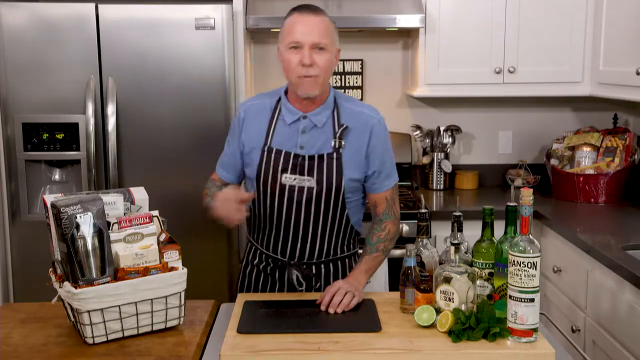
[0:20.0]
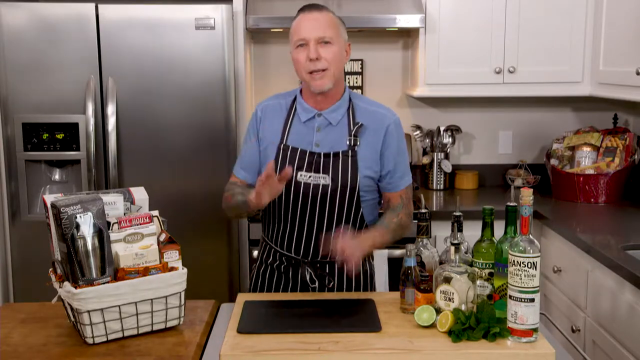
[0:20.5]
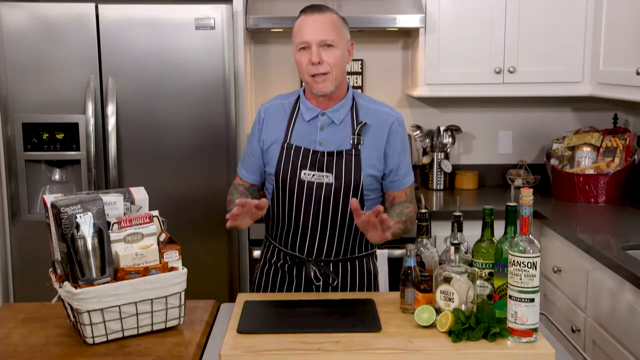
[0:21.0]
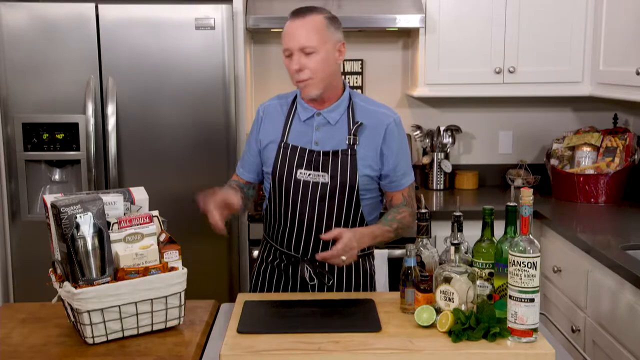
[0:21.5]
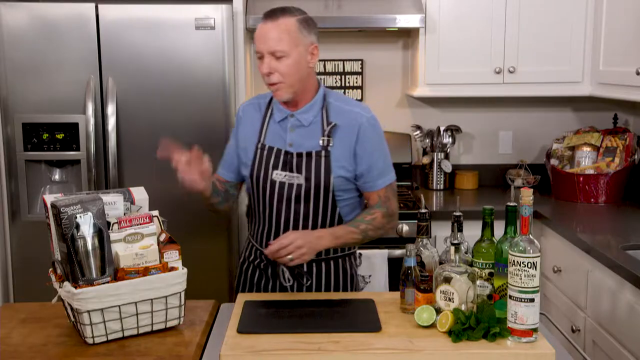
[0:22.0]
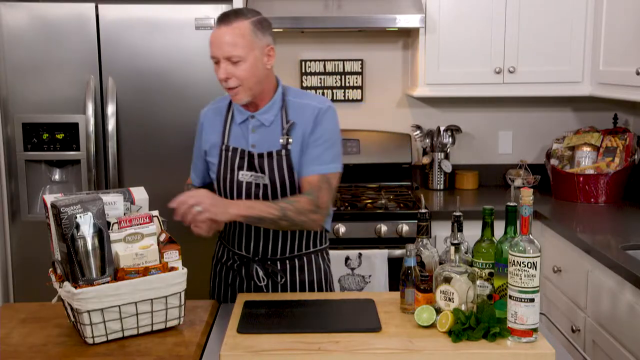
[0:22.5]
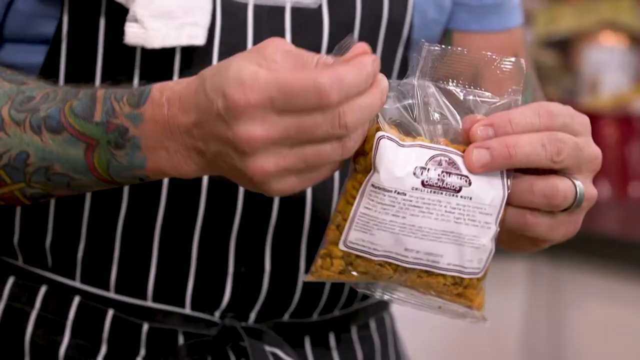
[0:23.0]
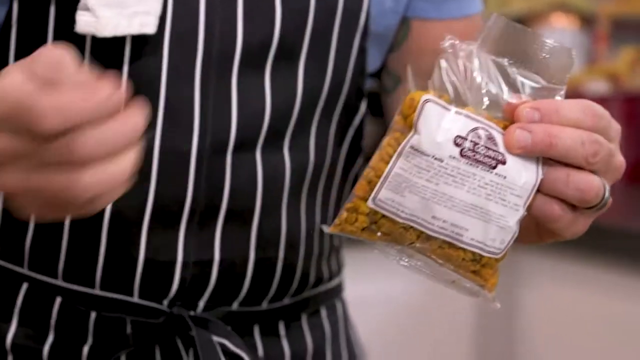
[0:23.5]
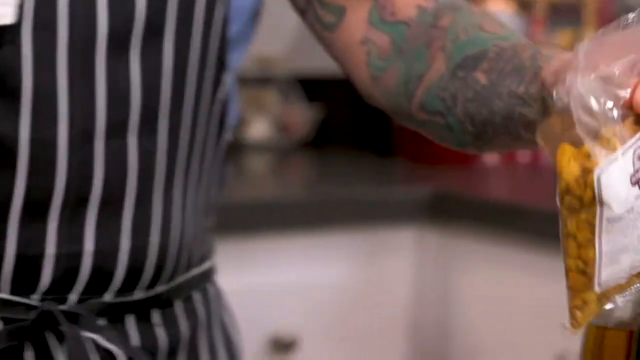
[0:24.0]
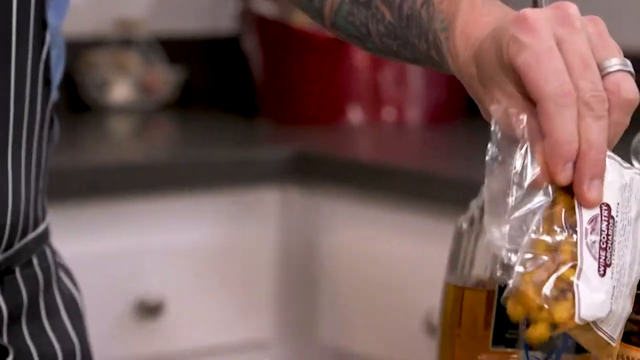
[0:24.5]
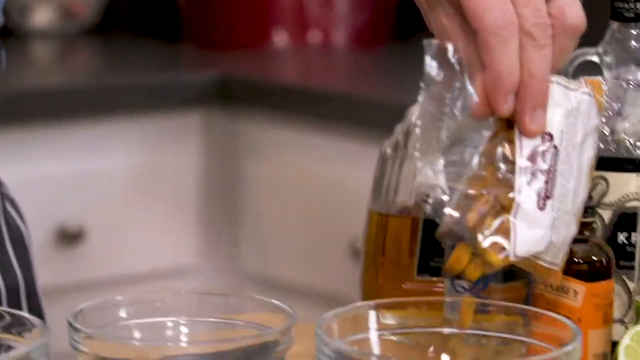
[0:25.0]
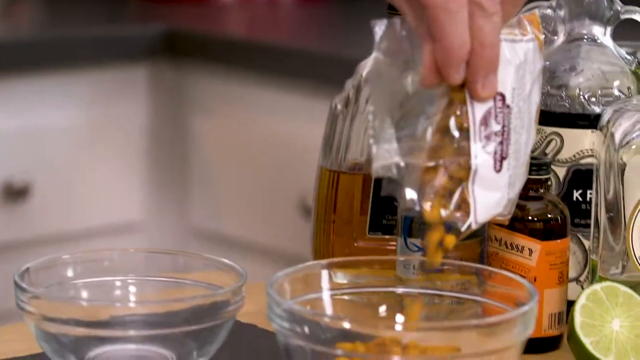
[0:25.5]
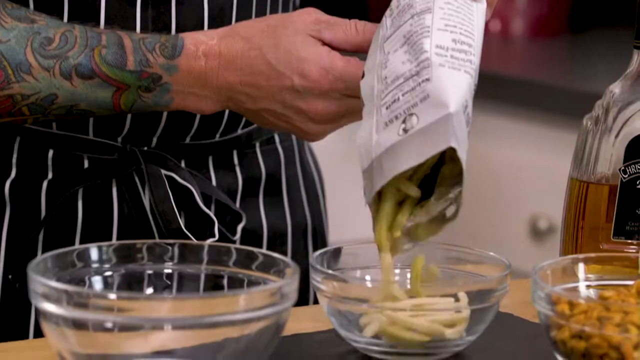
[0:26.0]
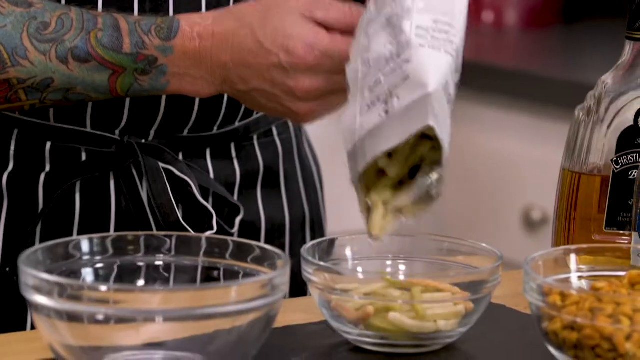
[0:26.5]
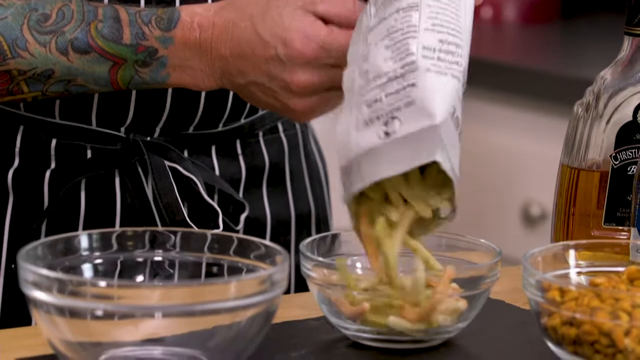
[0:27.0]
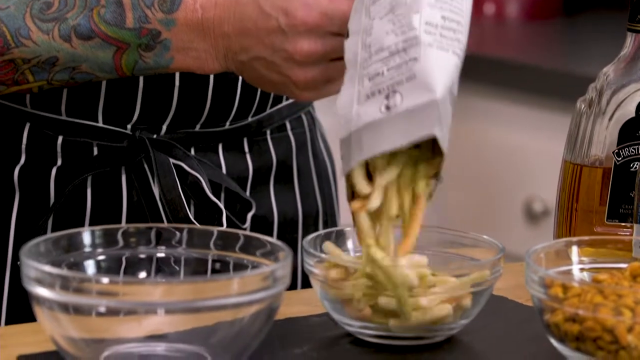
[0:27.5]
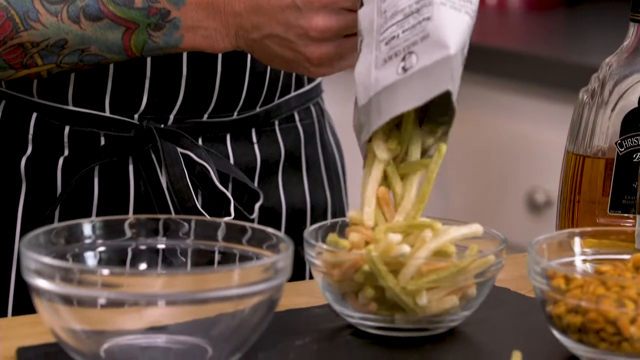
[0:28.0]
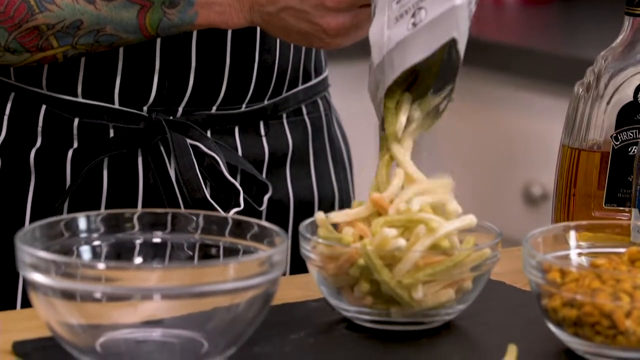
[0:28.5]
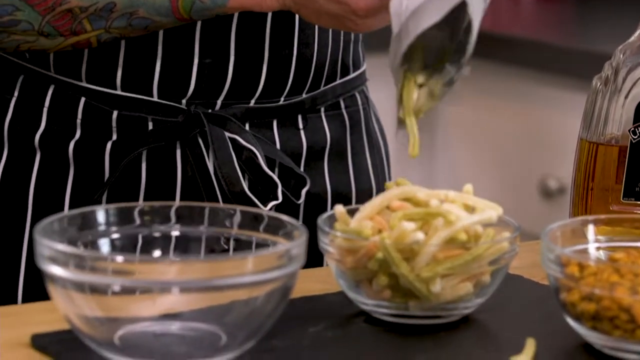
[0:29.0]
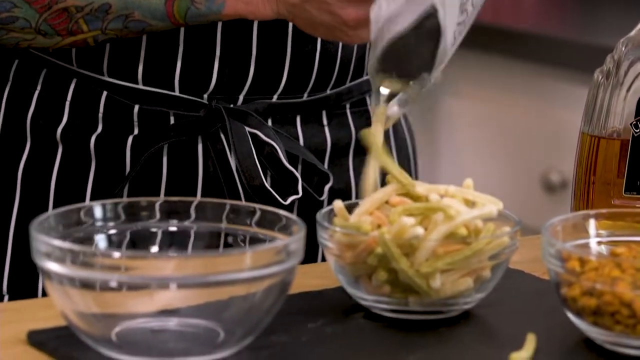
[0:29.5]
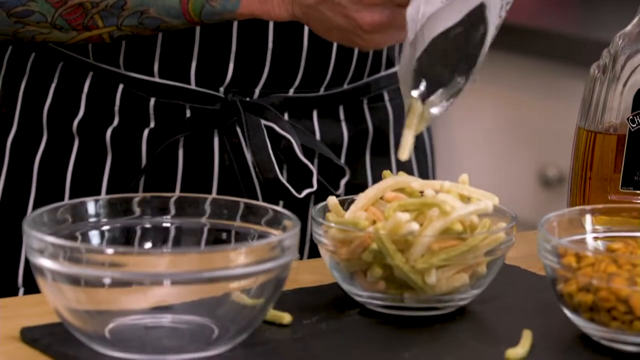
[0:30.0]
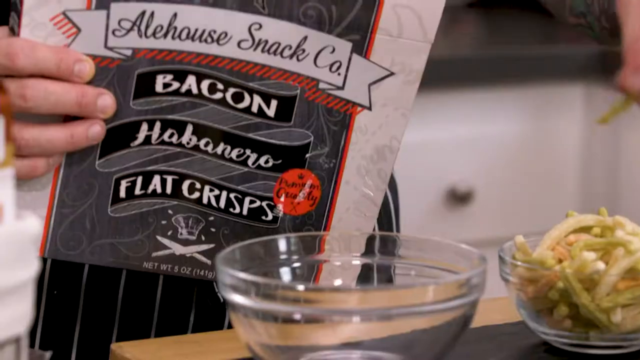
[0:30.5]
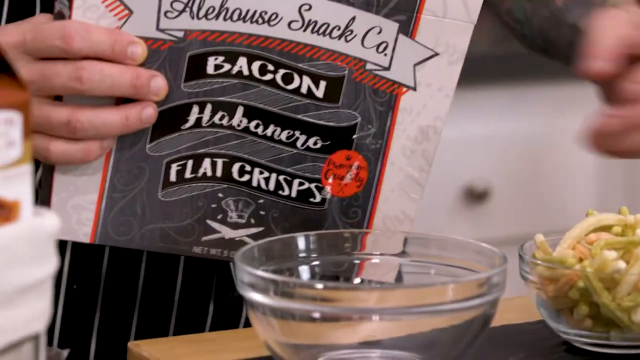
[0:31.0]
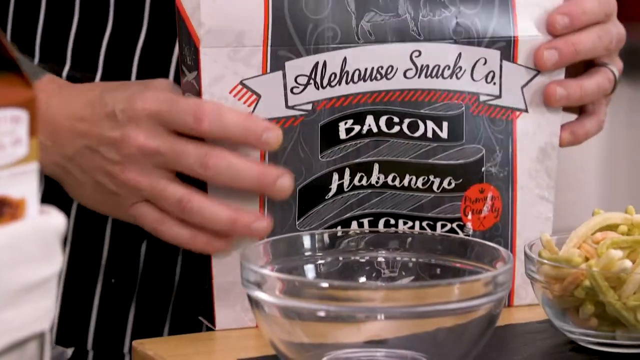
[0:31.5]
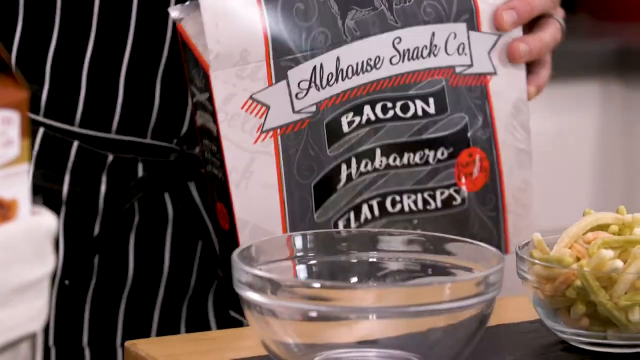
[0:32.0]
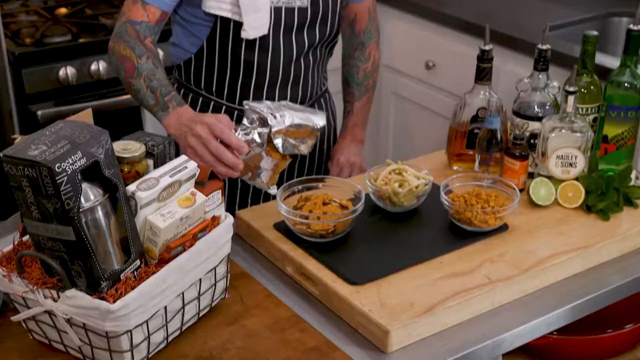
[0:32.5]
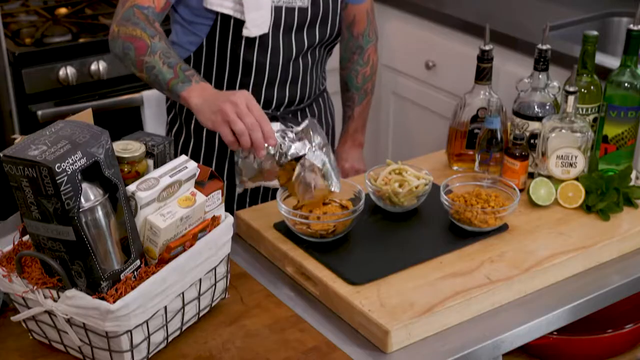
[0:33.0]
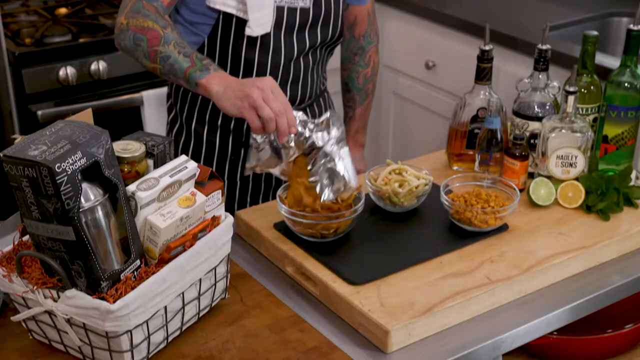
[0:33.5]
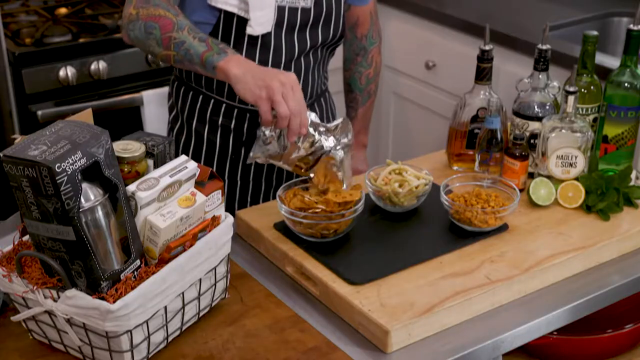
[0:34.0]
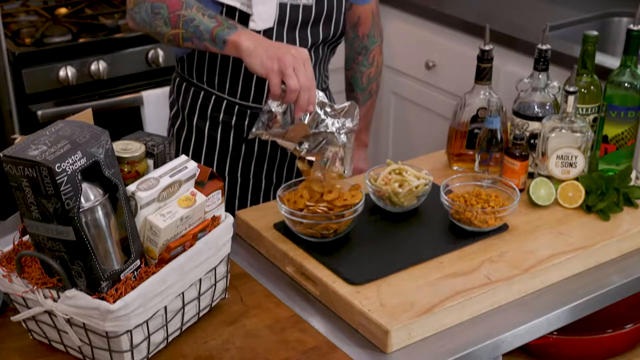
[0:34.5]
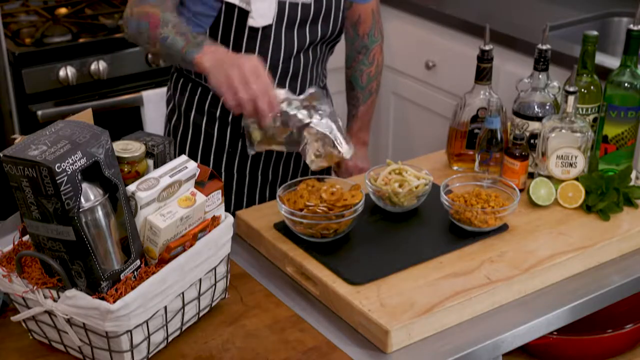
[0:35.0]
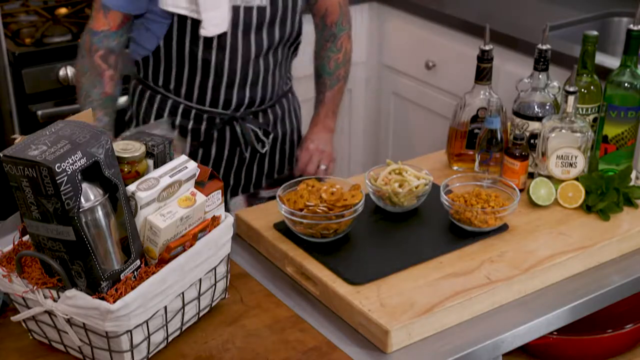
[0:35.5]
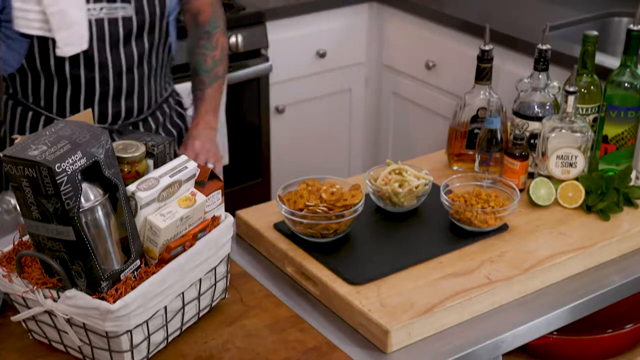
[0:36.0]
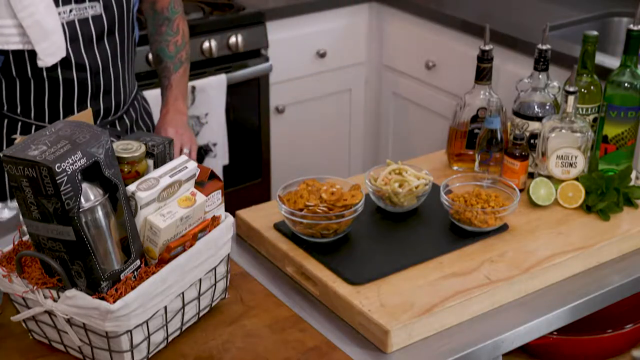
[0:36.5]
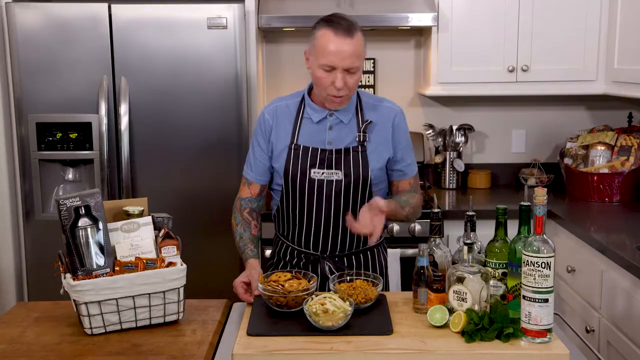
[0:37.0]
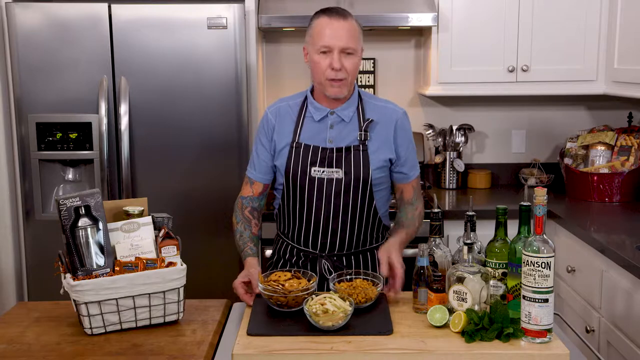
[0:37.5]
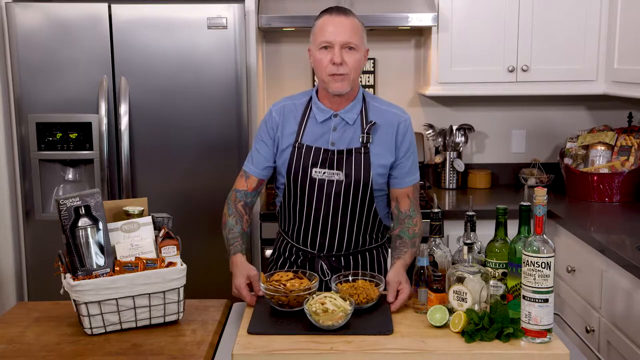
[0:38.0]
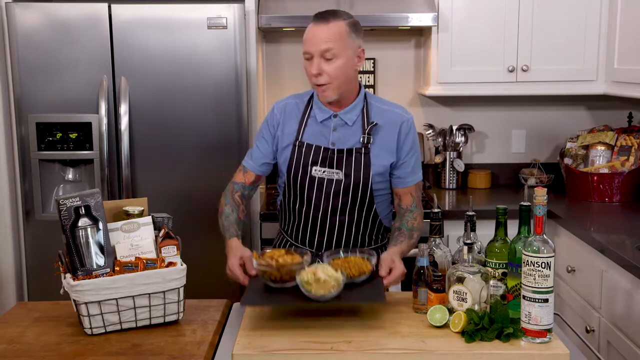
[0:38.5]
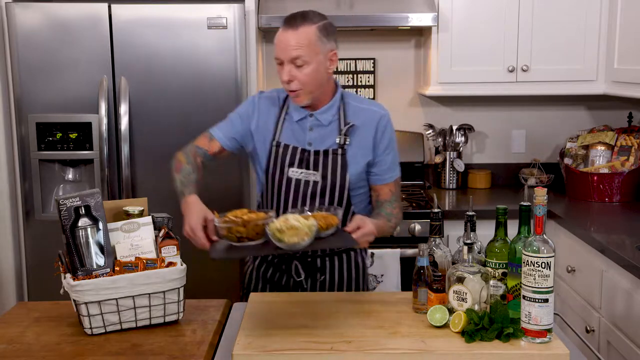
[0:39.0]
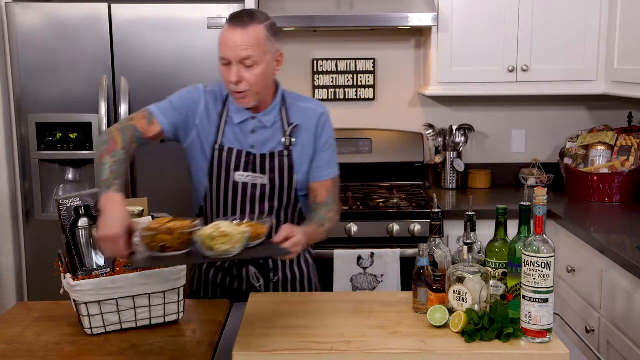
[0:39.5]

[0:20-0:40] The man carries a packet of bacon and empties it into a colourless bowl. He also empties out something brown that is small and round. There are two halves of citrus, one green and one yellow, both cut in half. The wrapped basket, which looks new, is black and white, and inside the hamper there is something purplish that looks like decoration. Far behind the man, writing appears to be stuck on the wall; it looks like it reads "I cook with wine sometimes I even add it to the food." The kitchen has white cupboards and a black and silver stove.